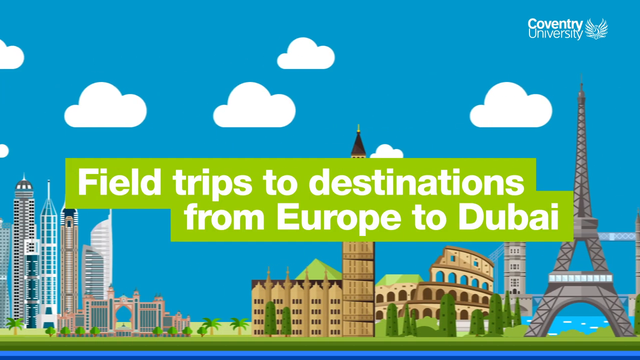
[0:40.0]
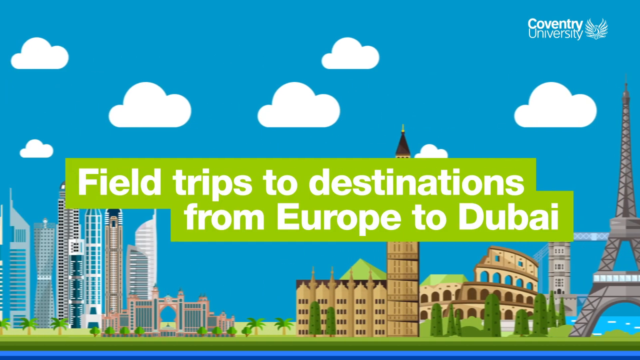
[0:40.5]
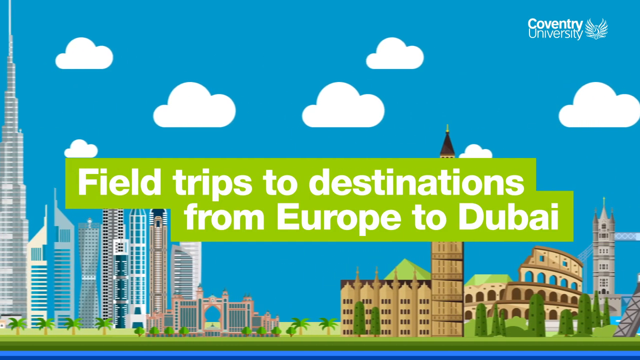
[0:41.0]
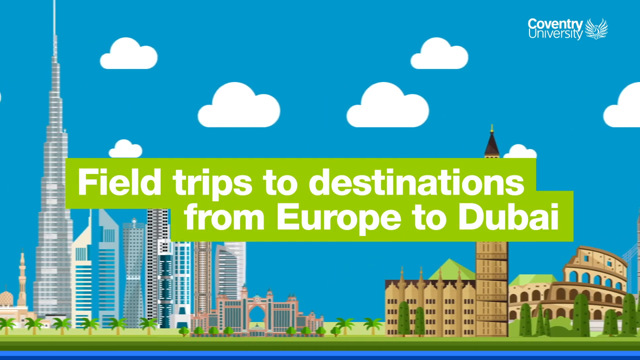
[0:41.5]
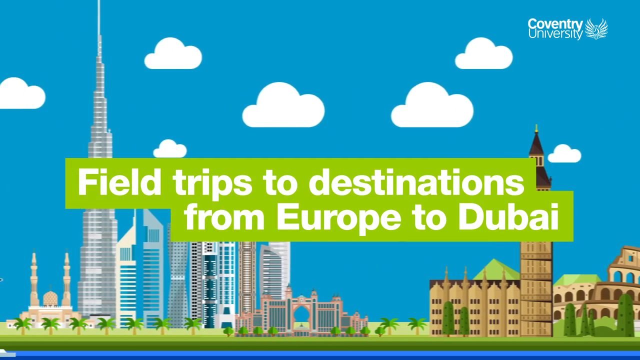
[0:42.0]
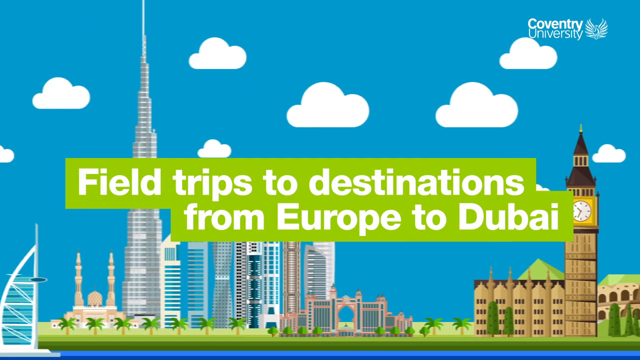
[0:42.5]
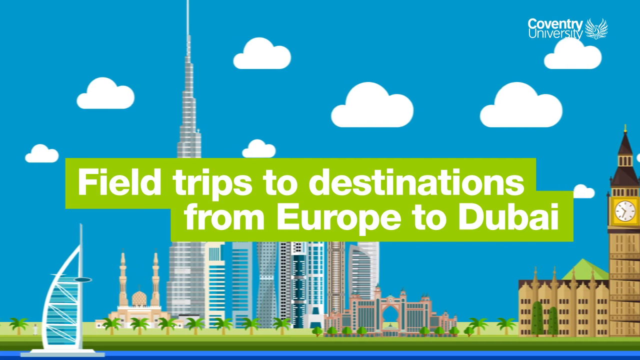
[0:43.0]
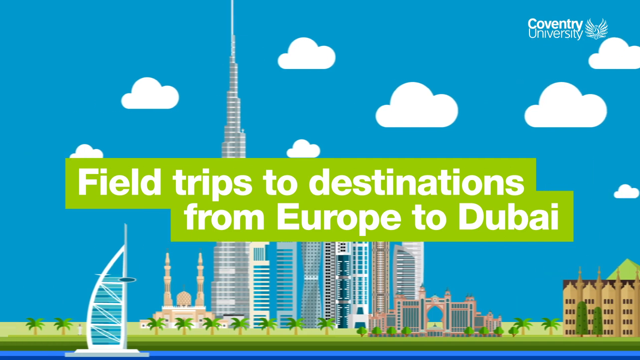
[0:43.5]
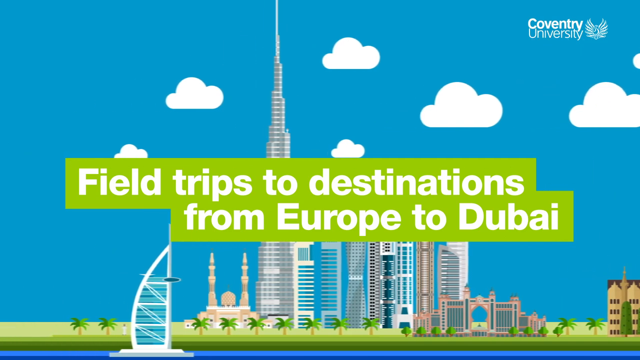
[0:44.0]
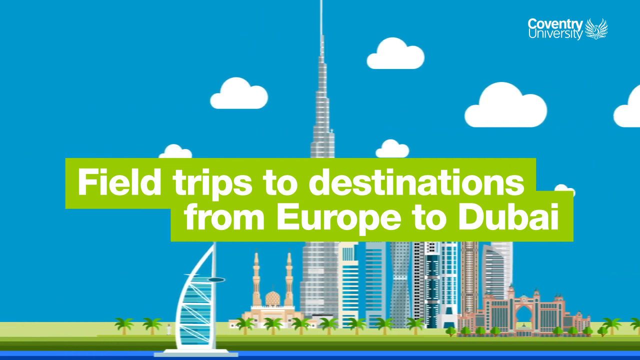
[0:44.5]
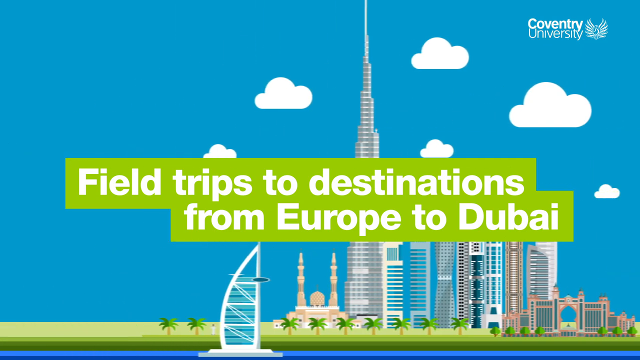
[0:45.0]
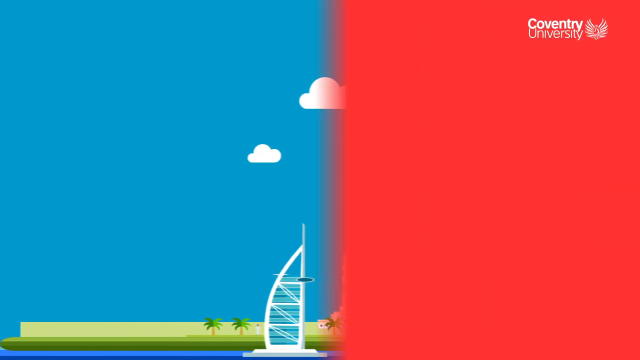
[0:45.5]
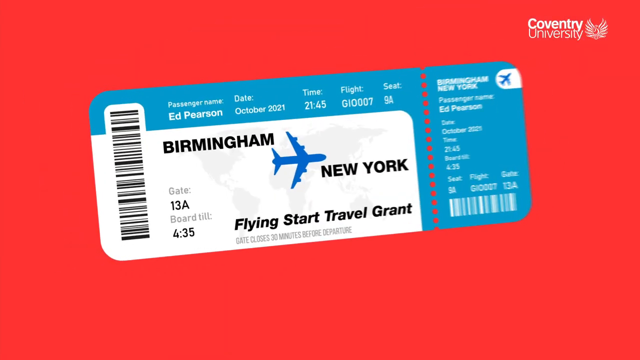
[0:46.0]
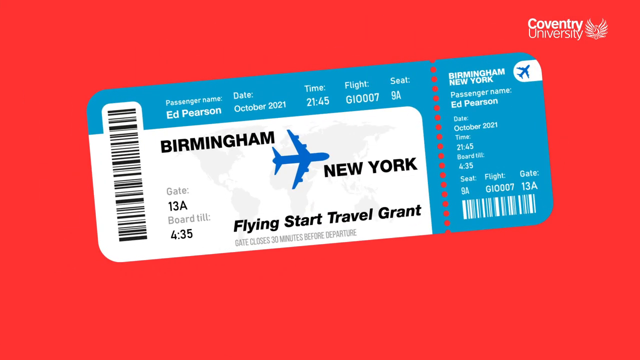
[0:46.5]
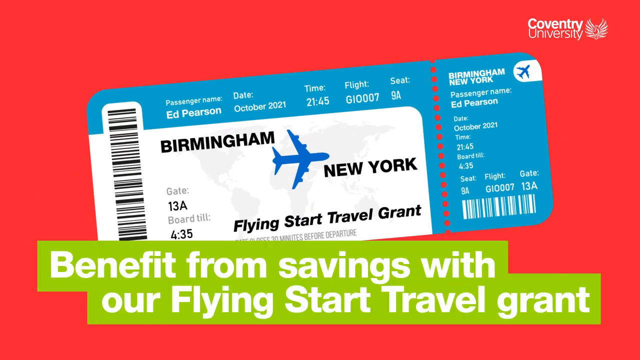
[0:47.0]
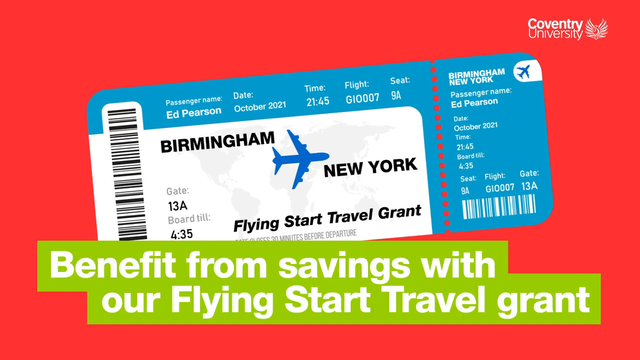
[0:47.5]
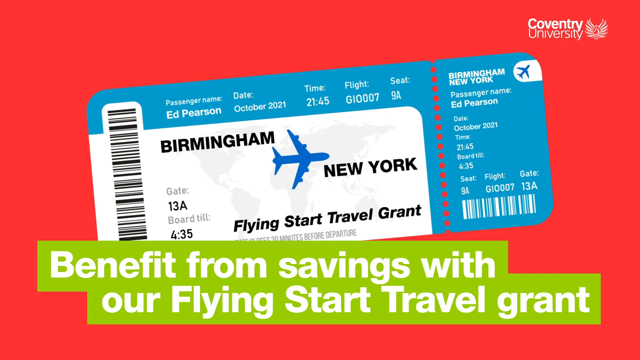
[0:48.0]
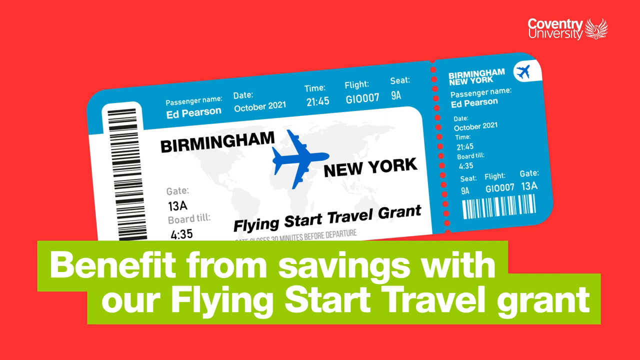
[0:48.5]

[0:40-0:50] Several large, popular buildings appear, including the Eiffel Tower, the Leaning Tower of Pisa and a few others, against a blue sky with white clouds; the buildings seem to pop up out of the sky. Bold white lettering reads "field trips to destinations from Europe to Dubai." The picture starts to move off to the left, and the next screen is red, with a boarding ticket from Birmingham to New York. The ticket reads "Flying Start Travel Grant." At the bottom of the red screen, bold white lettering reads "benefit from savings with our Flying Start Travel Grant." As the page moves on, the words "Coventry University" appear in the top right corner.